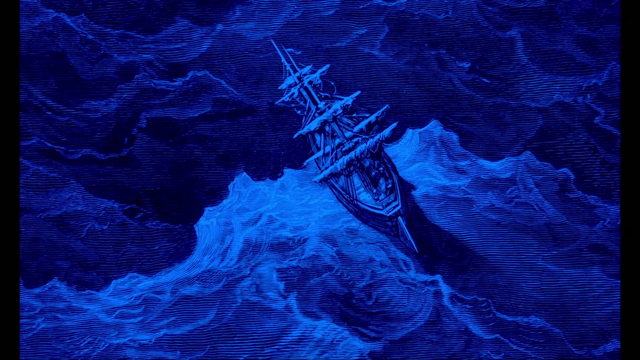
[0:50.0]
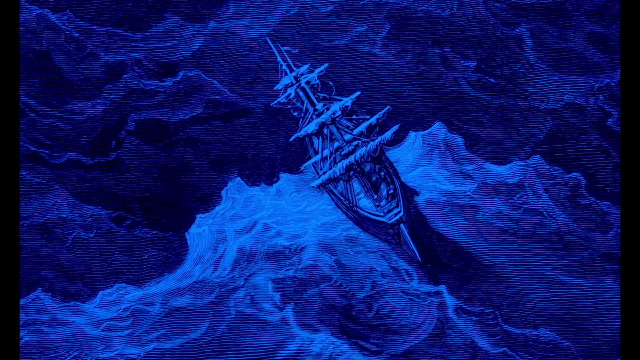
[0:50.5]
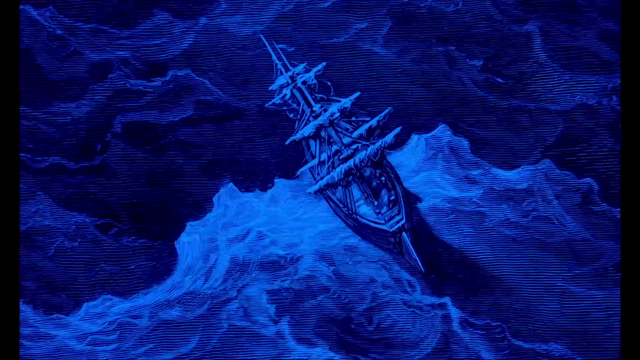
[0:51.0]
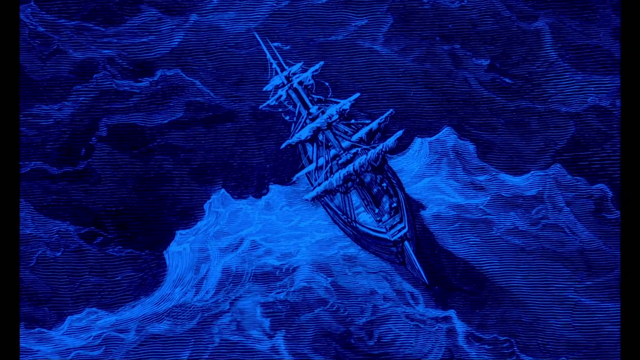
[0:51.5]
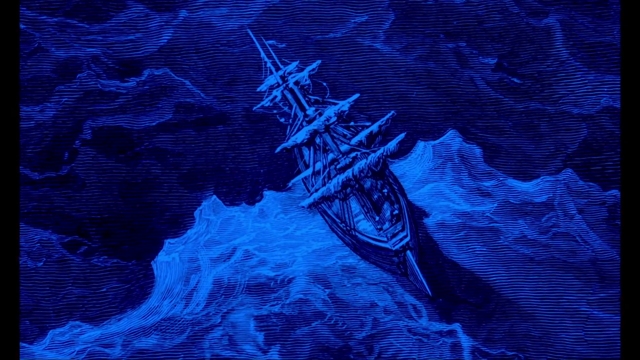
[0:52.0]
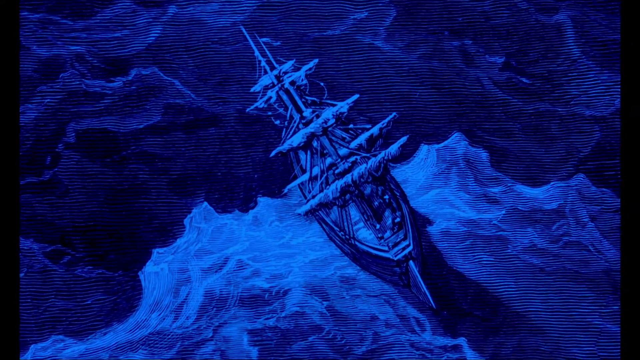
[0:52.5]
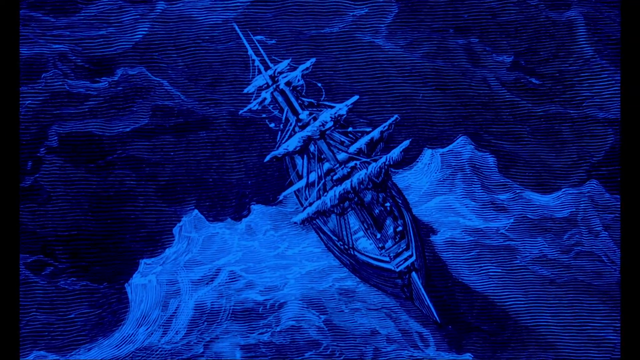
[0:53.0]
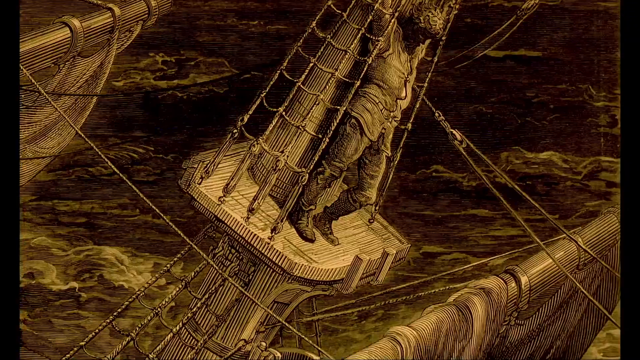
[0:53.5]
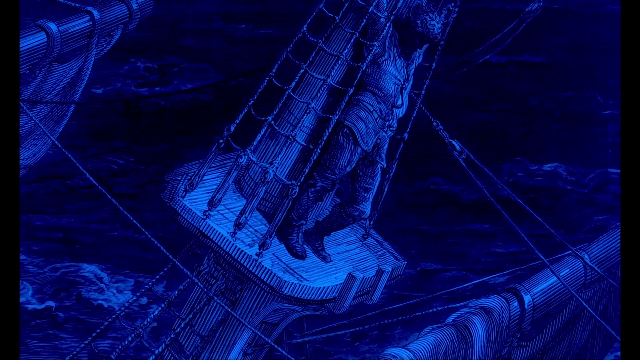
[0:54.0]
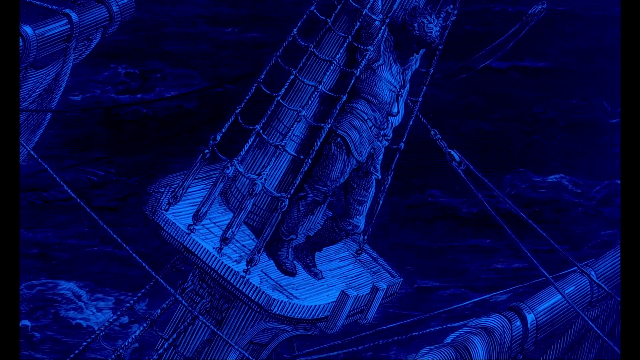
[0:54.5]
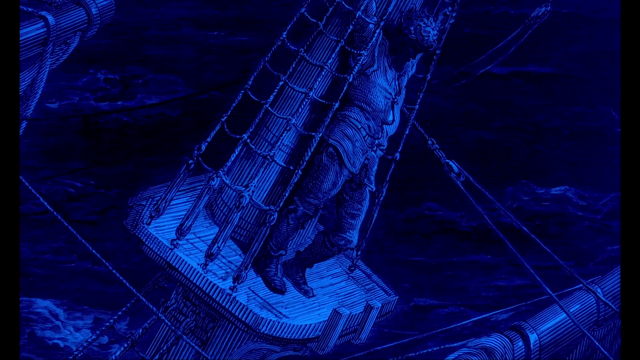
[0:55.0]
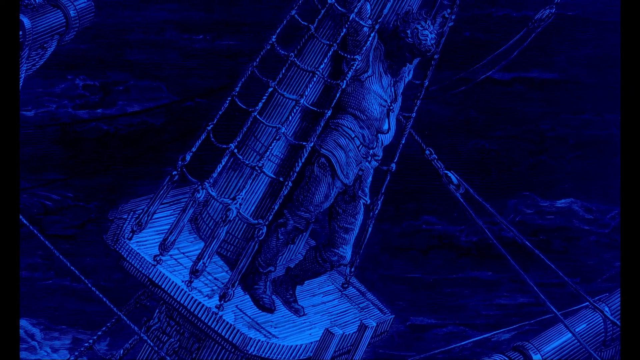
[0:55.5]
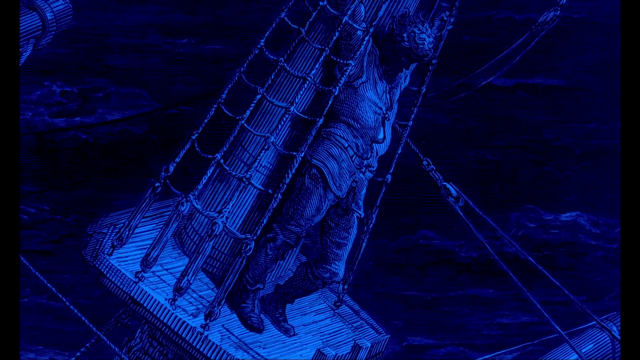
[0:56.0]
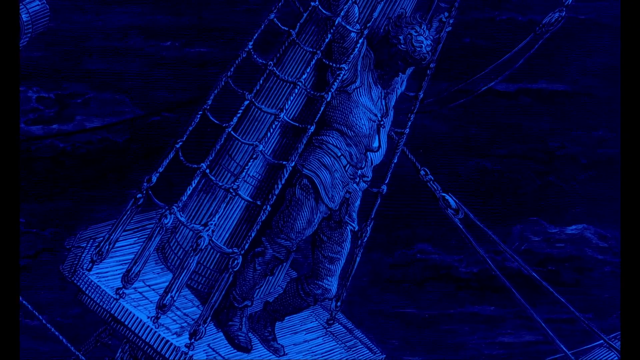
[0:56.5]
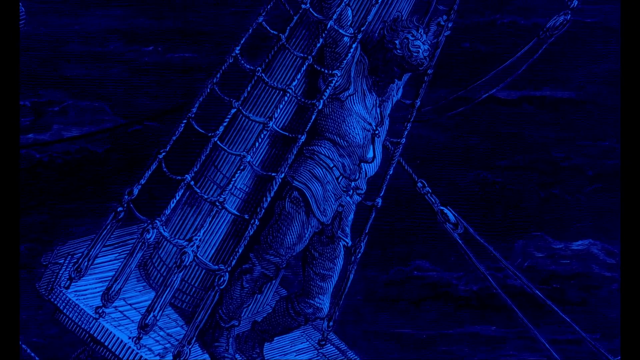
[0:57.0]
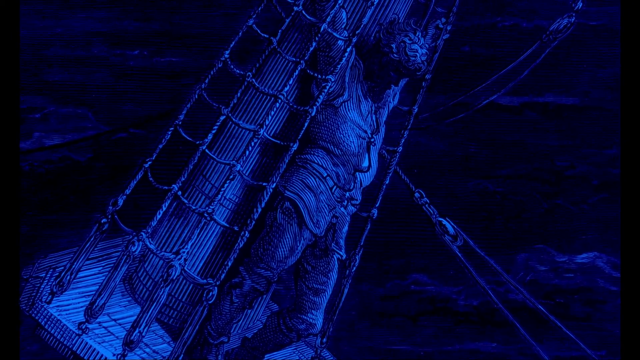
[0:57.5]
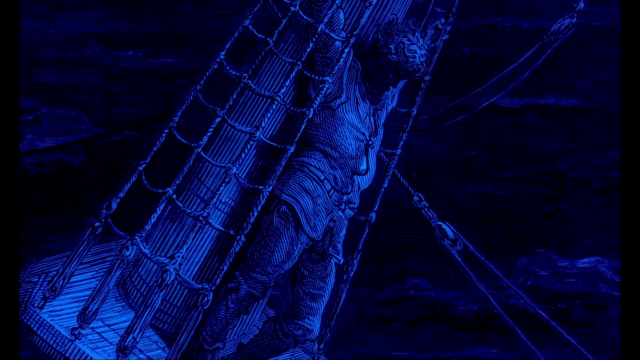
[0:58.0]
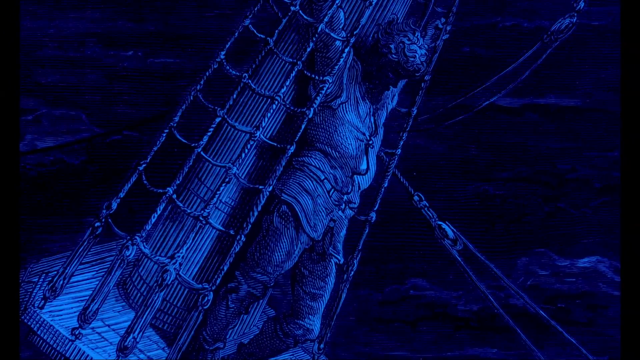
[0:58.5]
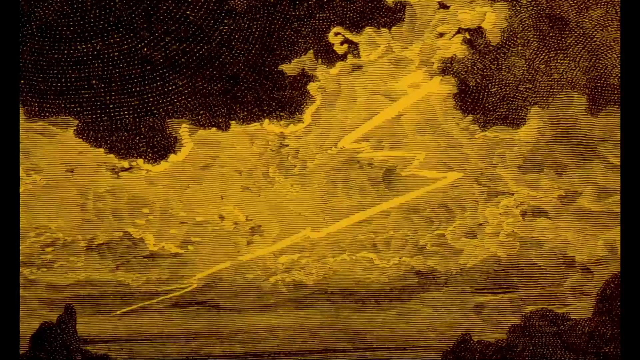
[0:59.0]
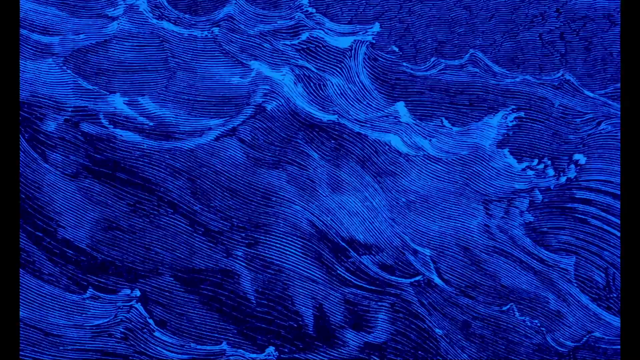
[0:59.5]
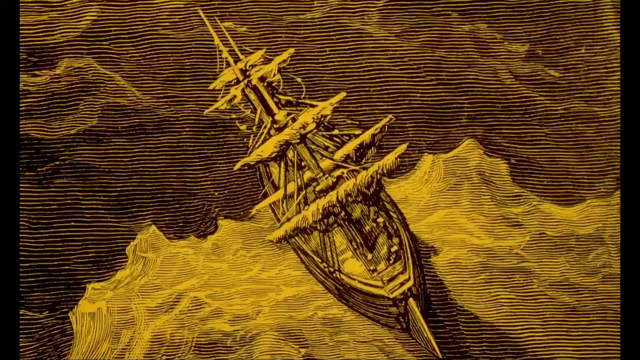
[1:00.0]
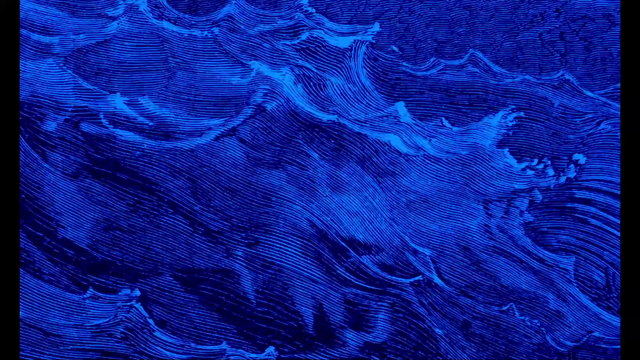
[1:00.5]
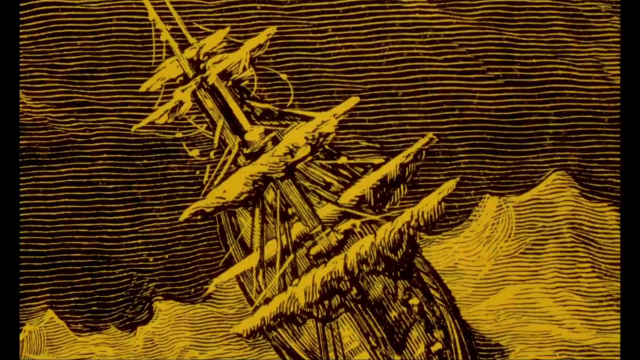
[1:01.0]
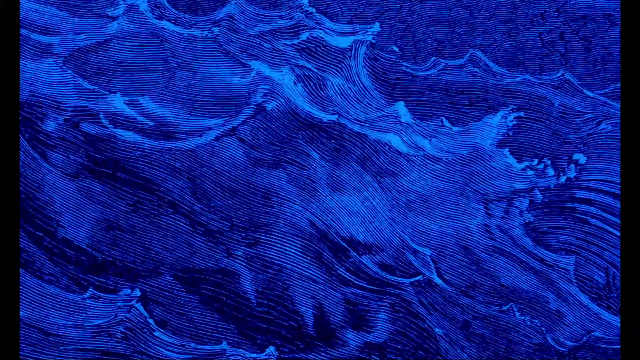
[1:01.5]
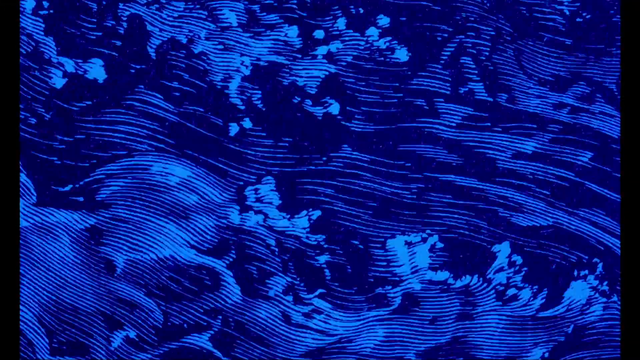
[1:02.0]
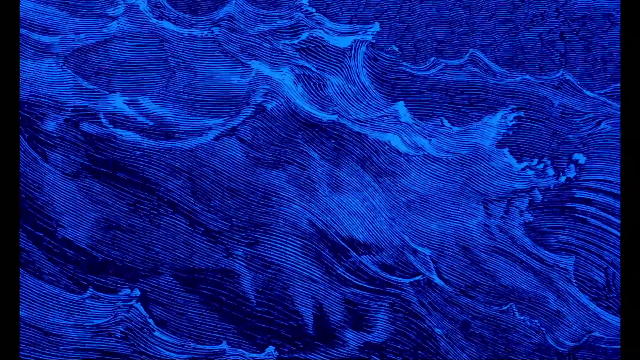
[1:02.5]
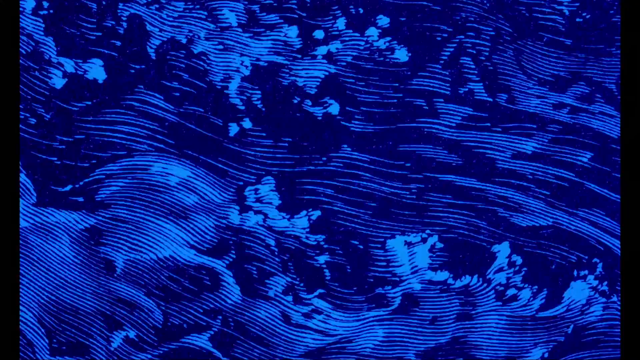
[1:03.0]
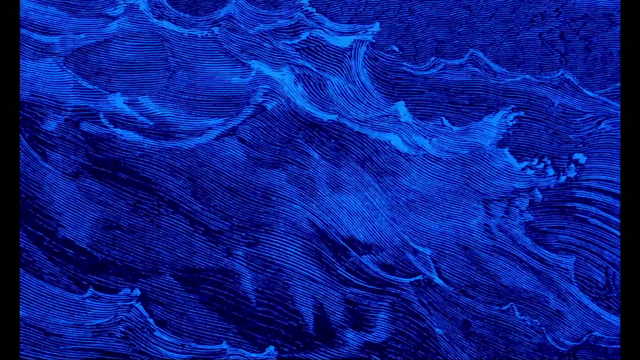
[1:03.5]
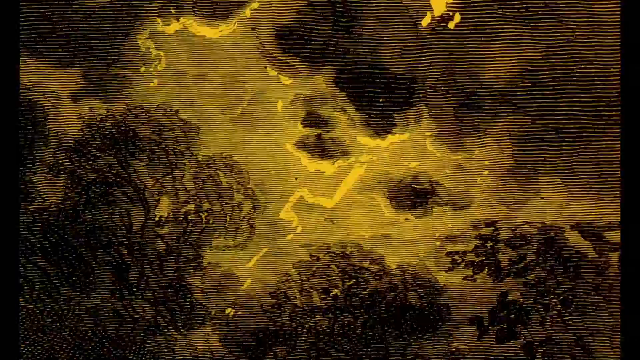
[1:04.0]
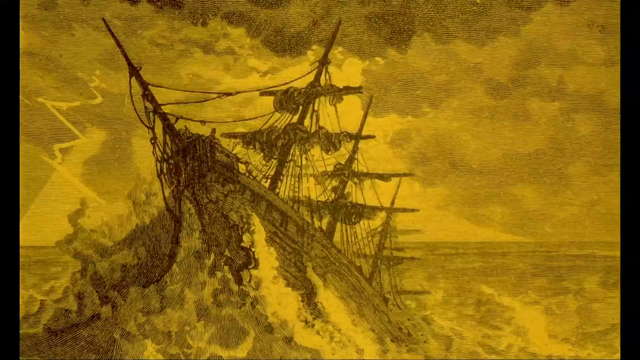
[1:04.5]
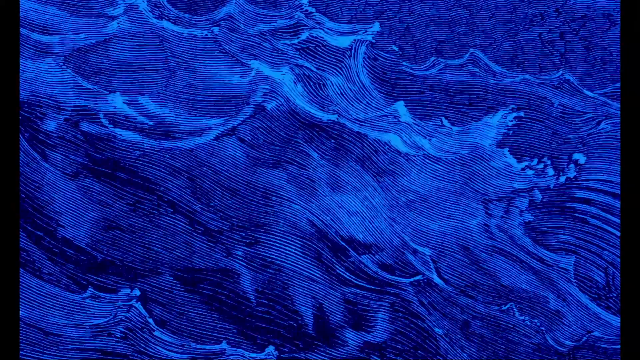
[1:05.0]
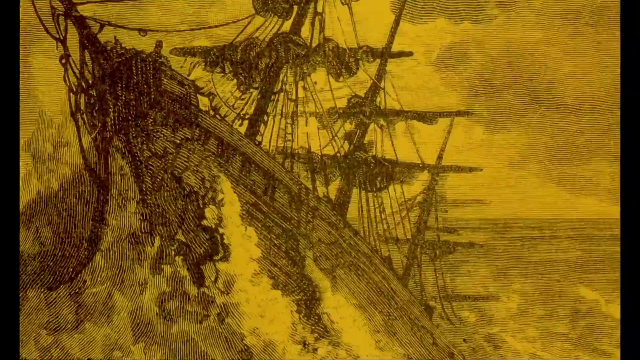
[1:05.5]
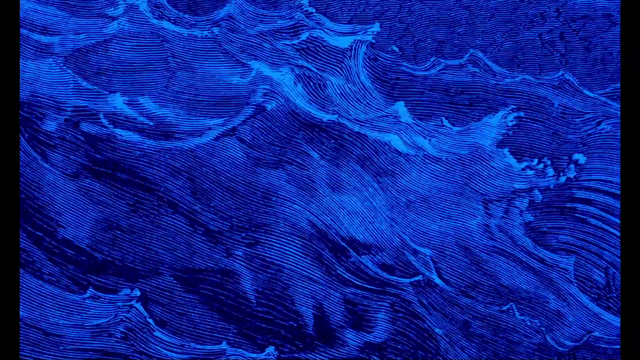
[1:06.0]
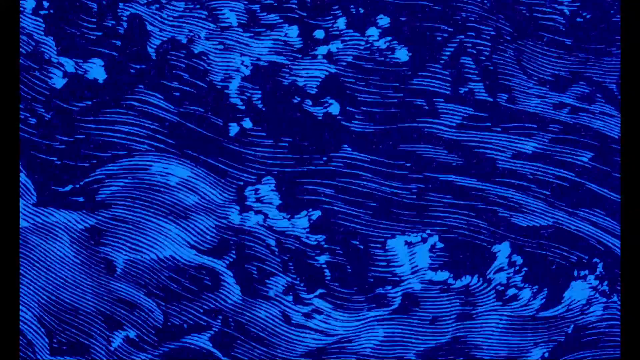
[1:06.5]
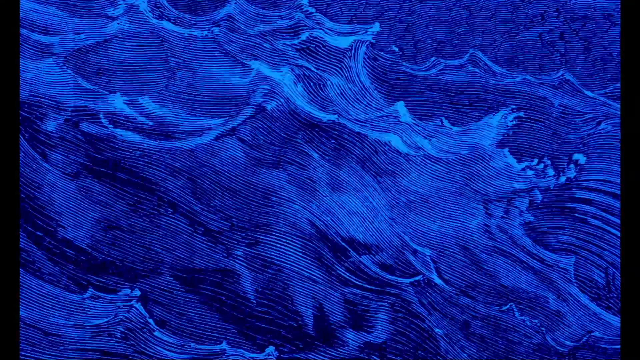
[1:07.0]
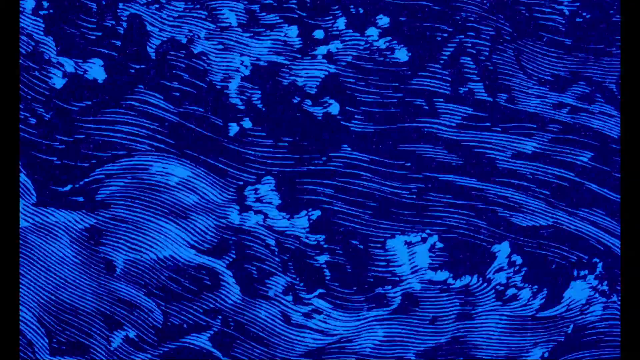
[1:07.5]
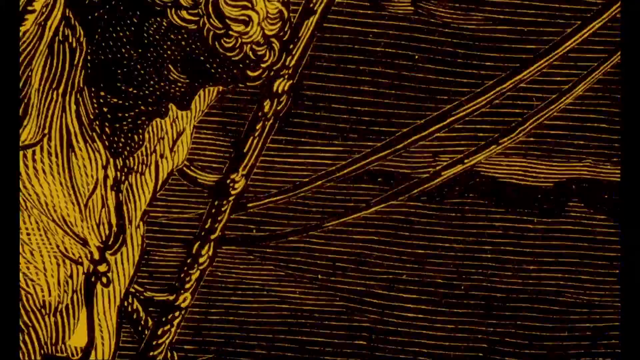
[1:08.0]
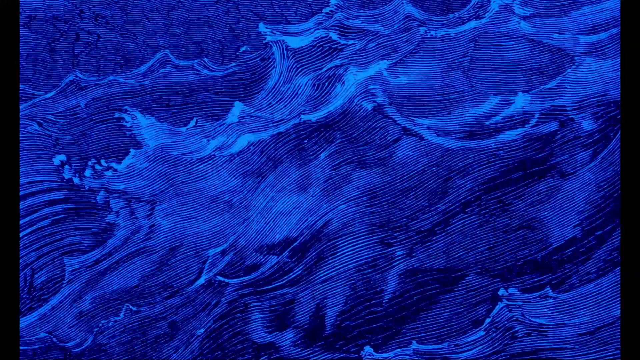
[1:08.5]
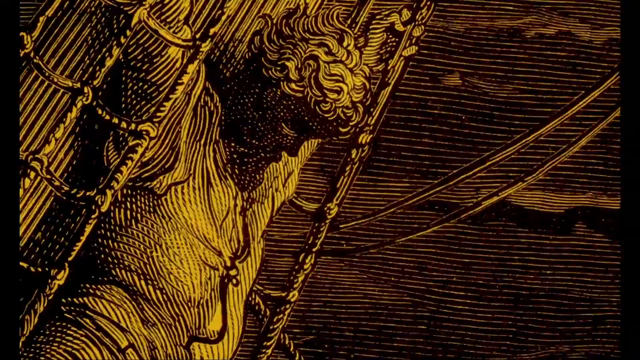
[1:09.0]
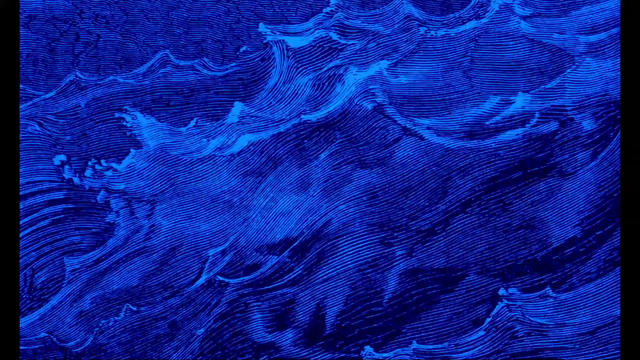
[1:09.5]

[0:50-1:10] The camera is focused on the ship in the center of the blue painting and continues to zoom in. There is a sudden flash, and the screen turns yellow for a moment before returning to its previous state. The camera keeps zooming in, then the scene transitions to a painting in the same color scheme, this time zoomed in on the boat's mast and sails, with a man gripping onto the ropes. The camera continues to zoom in, and the screen flashes yellow before the next scene: a yellow and black cloudy sky with lightning bolts coming from the clouds, and trees below. It quickly changes to another painting in the same style of a lightning bolt shooting from some clouds. A painting all in blue, in the same style, depicting waves is quickly shown, followed by a painting of a ship on water, in the same style but done in yellow. The scene then rapidly alternates many times between a blue painting of water and the yellow painting of the ship. It quickly cycles through many different paintings of water, then through many different paintings of the sky and yellow lightning bolts. A yellow painting of a sinking boat is shown, alternating with a painting of water, zooming in closer on the sinking boat each time. Many paintings of water are shown. The scene then transitions to a painting of a man on the mast of the ship, his head hung, gripping onto the ropes beside him, and the scene flips between him and paintings of water.